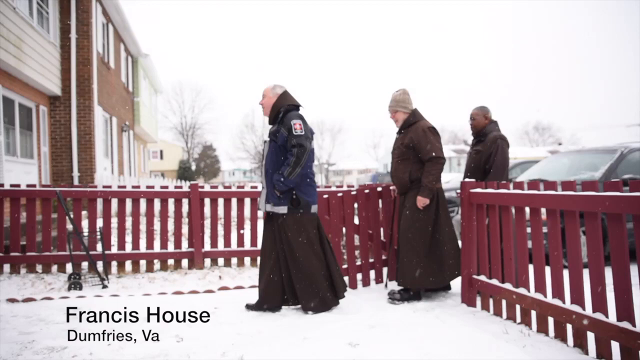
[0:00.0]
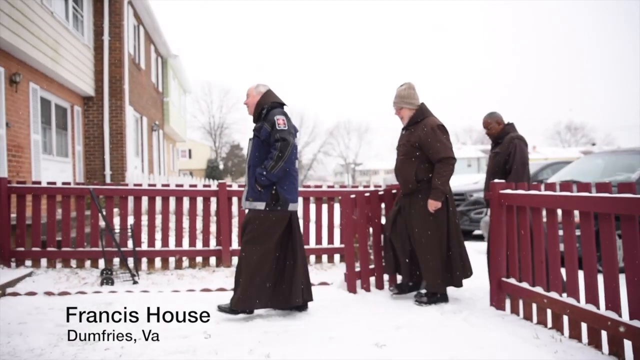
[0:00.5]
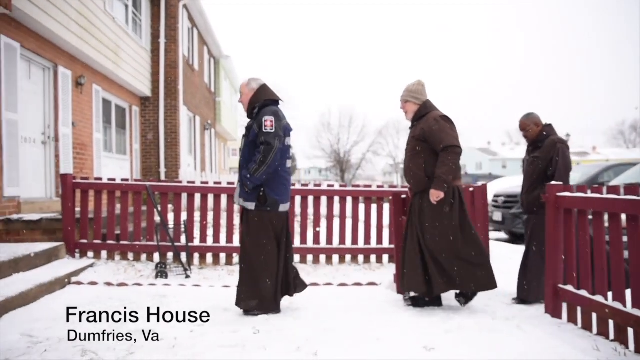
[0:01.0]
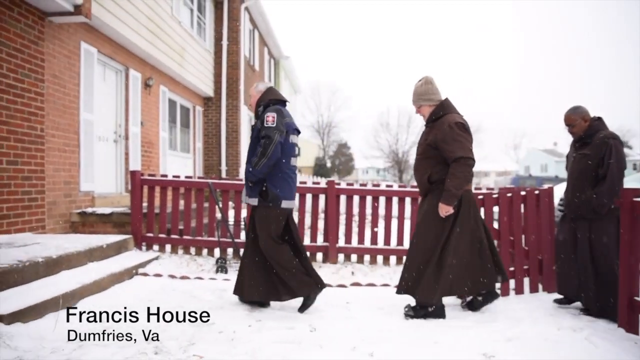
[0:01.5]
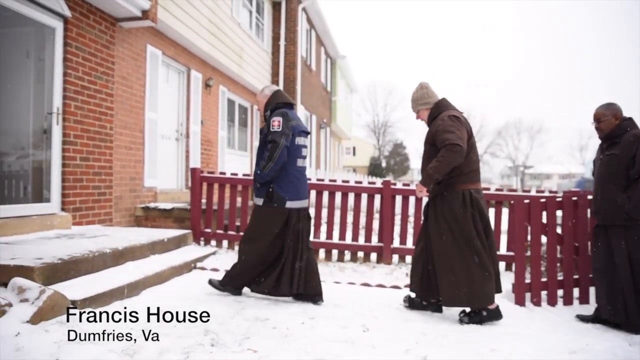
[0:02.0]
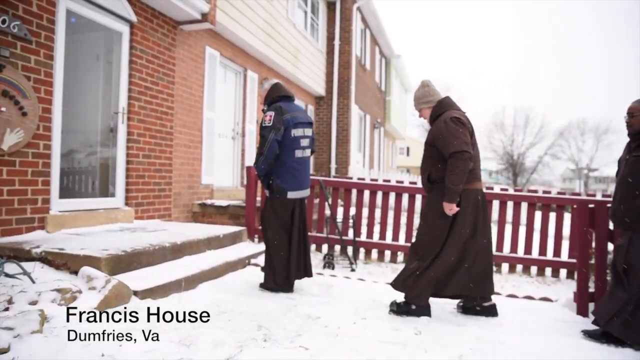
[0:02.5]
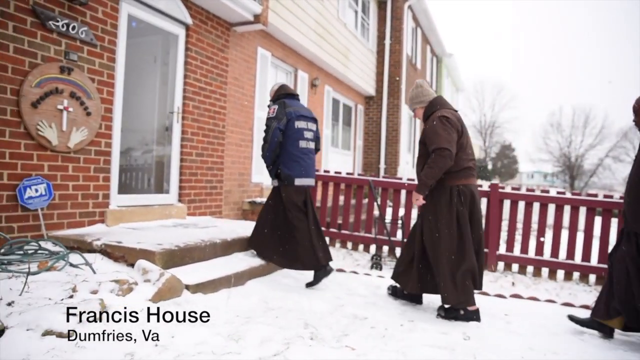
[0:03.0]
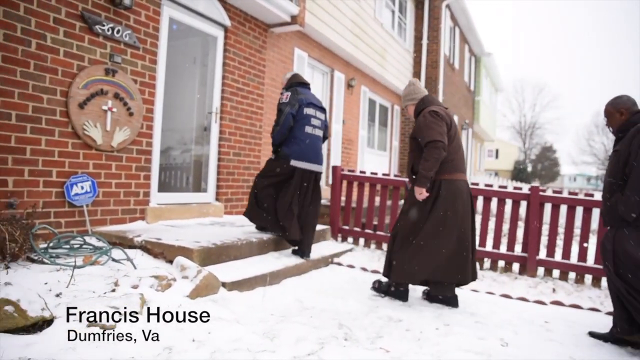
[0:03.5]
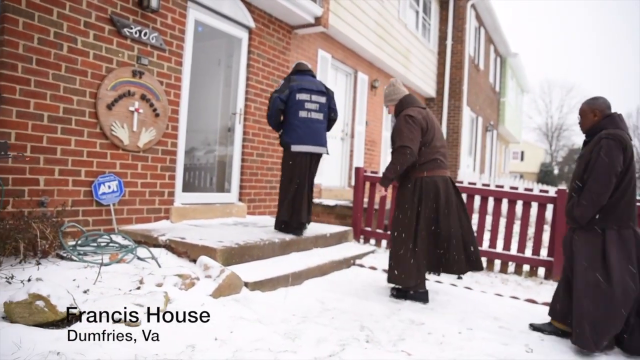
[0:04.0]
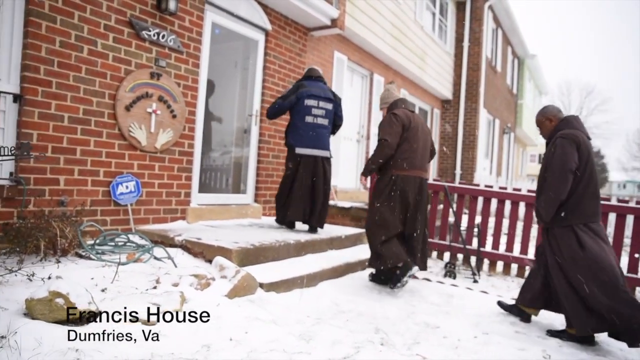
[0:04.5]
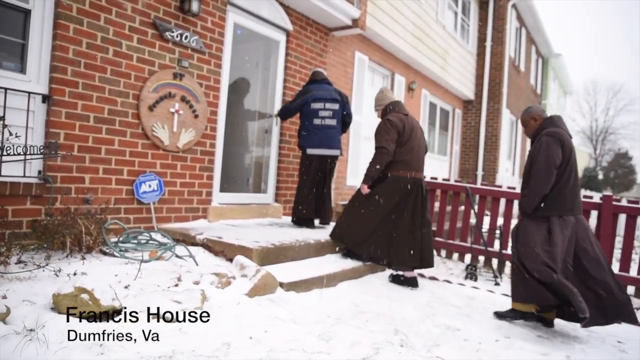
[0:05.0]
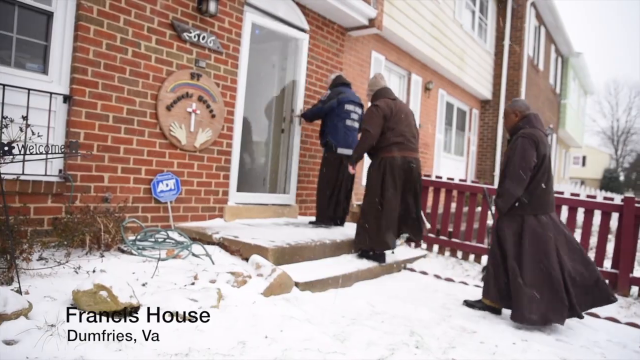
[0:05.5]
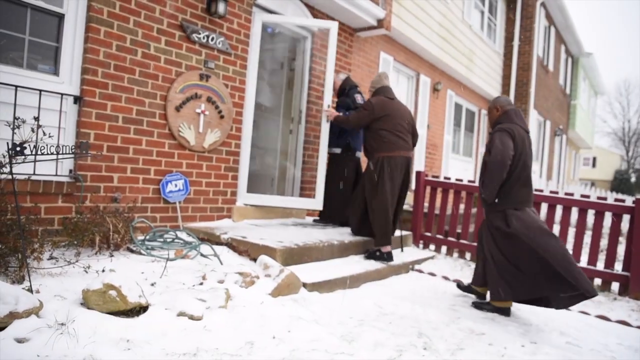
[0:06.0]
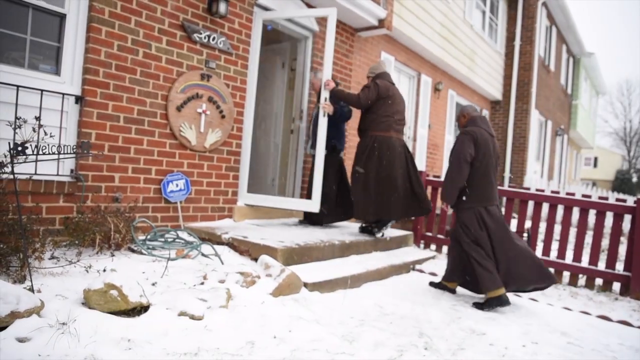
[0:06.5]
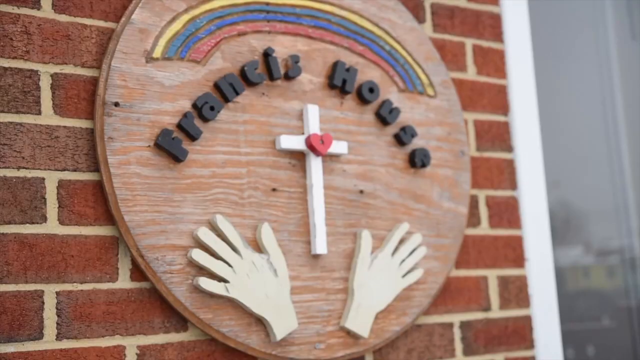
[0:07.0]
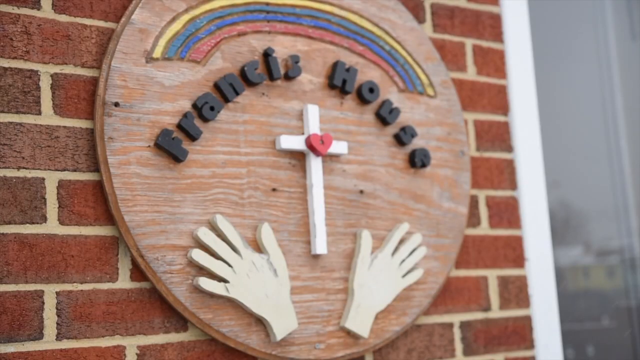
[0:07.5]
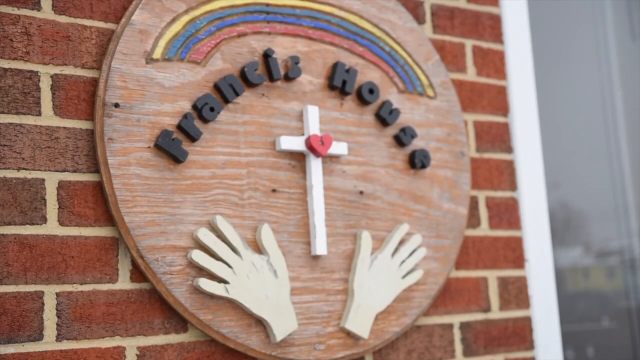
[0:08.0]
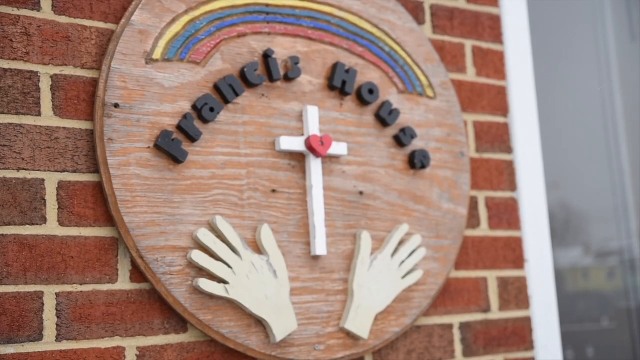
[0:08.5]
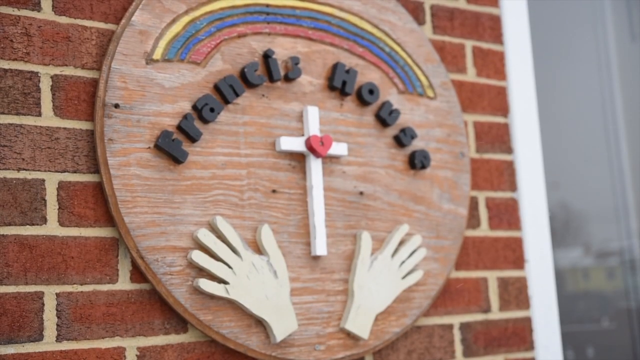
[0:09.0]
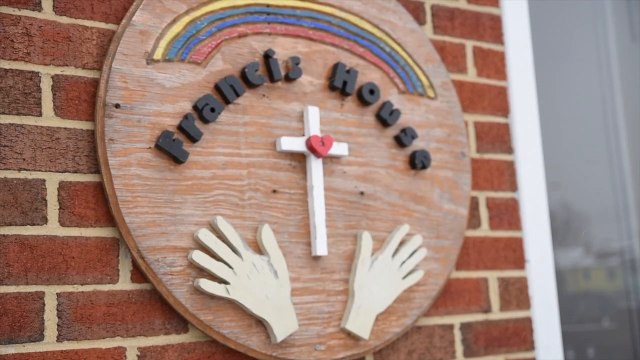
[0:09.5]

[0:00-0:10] Three men who look elderly walk along a snowy path and into a building; on-screen text identifies the place as "Francis house Dumfries". The building has a brick wall, and the men wear big clothes, as it looks like a cold area. They walk one behind the other in a single line of three, step up the staircase and go into the building, one of them with his hand tucked inside. In front is a sign with "Francis house" written on it, rainbow colours, and a cross with a red heart and two hands spread out under it.